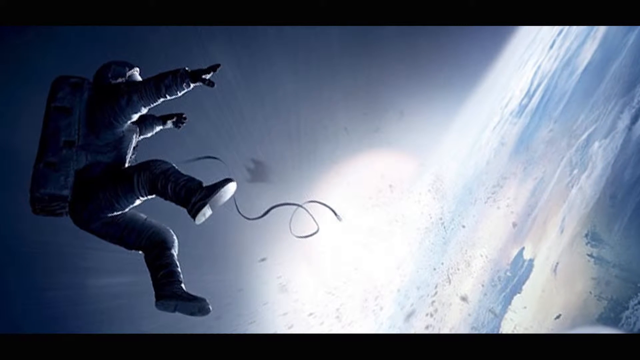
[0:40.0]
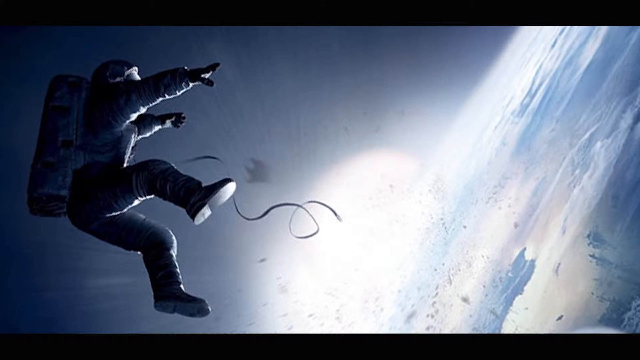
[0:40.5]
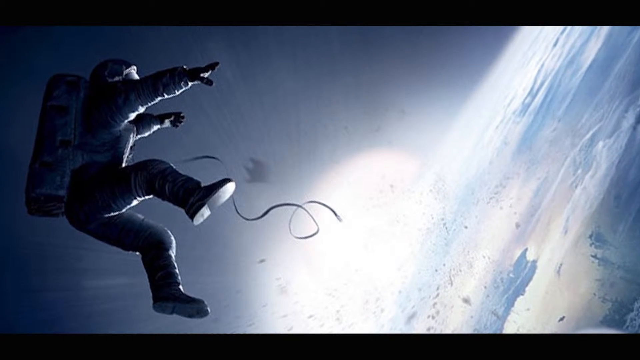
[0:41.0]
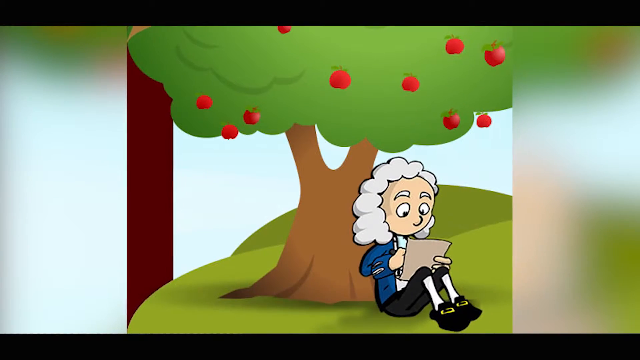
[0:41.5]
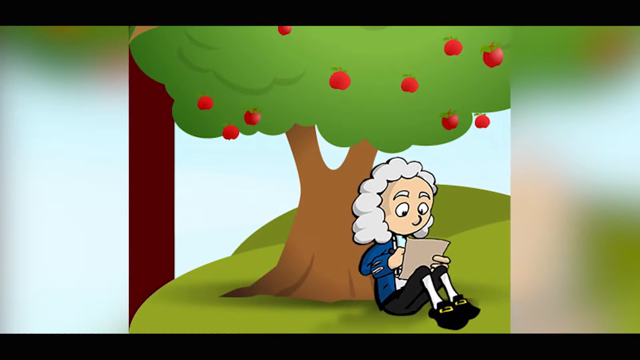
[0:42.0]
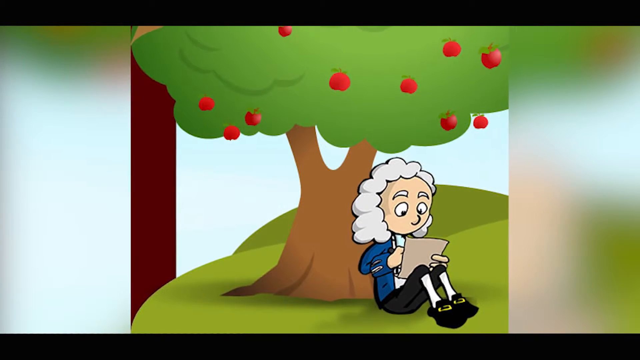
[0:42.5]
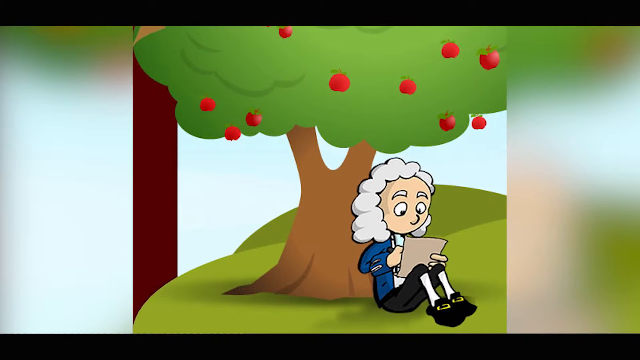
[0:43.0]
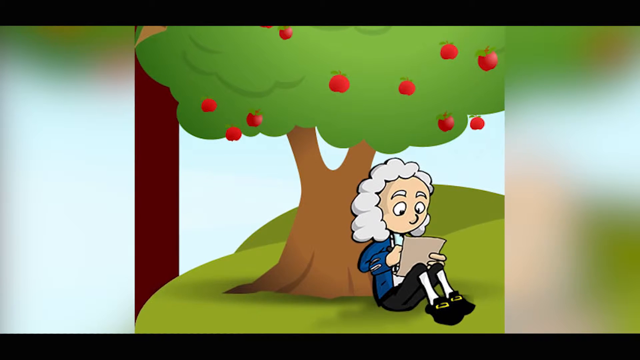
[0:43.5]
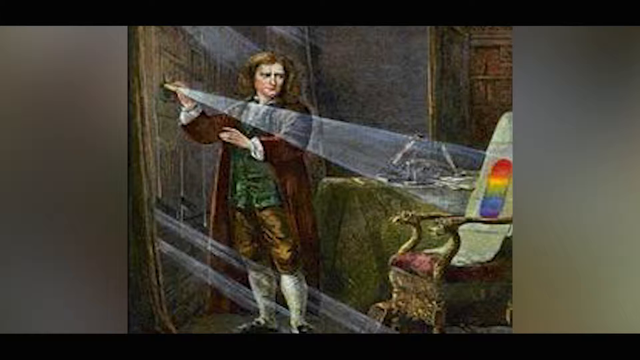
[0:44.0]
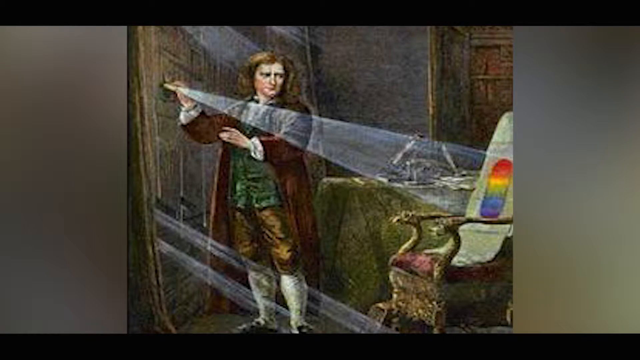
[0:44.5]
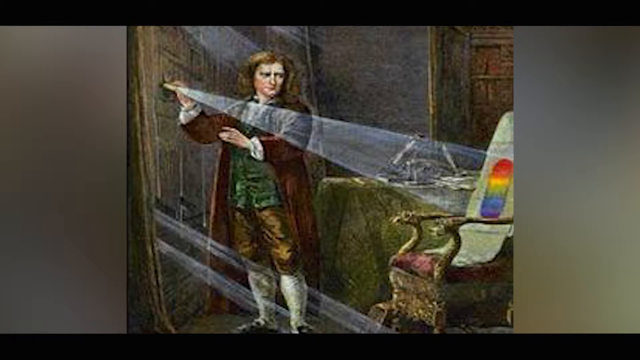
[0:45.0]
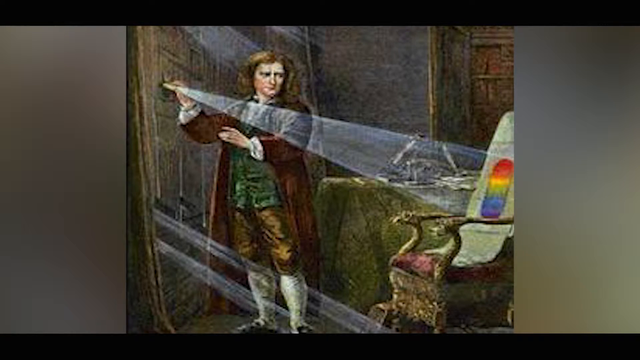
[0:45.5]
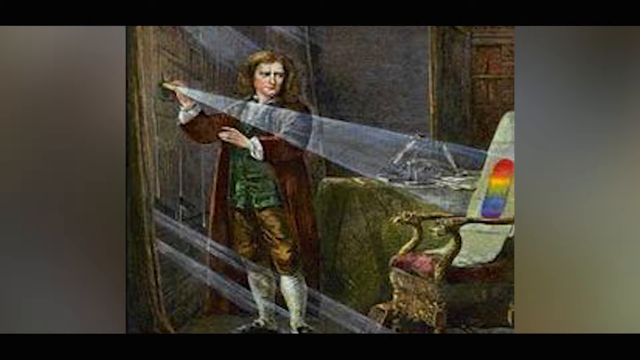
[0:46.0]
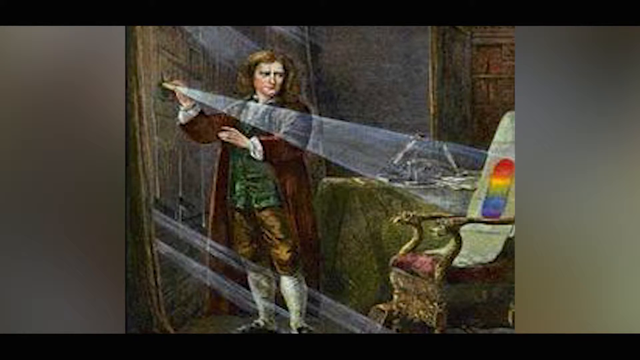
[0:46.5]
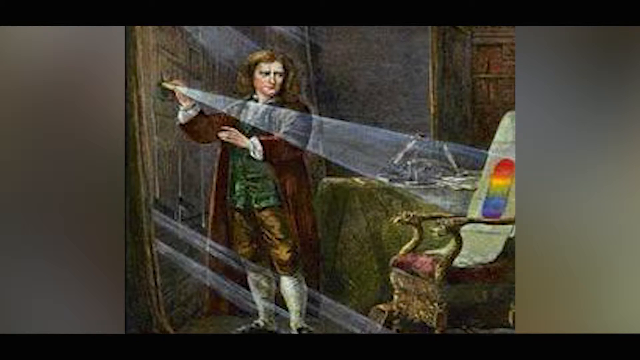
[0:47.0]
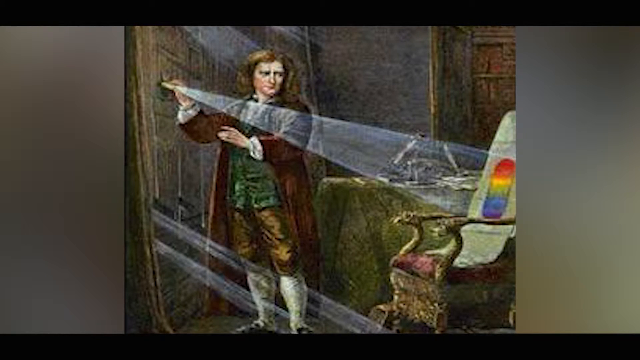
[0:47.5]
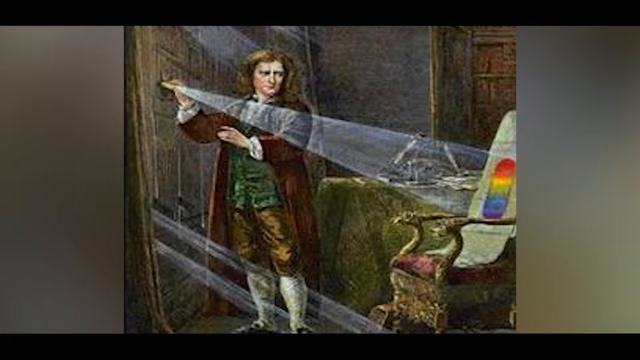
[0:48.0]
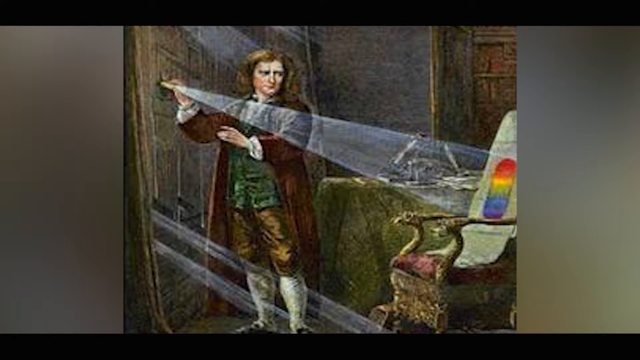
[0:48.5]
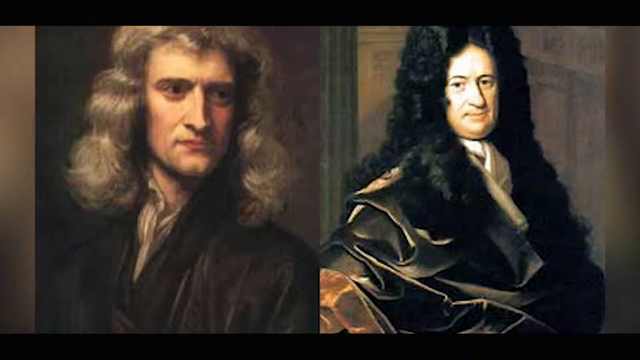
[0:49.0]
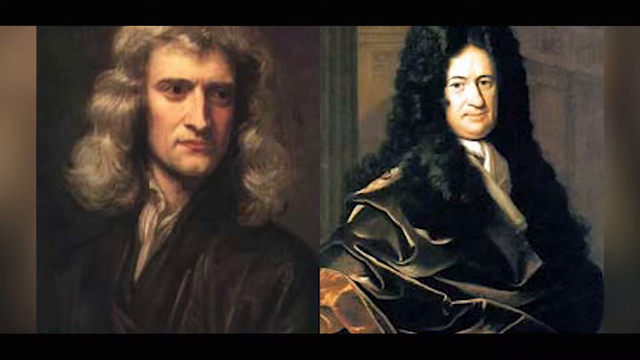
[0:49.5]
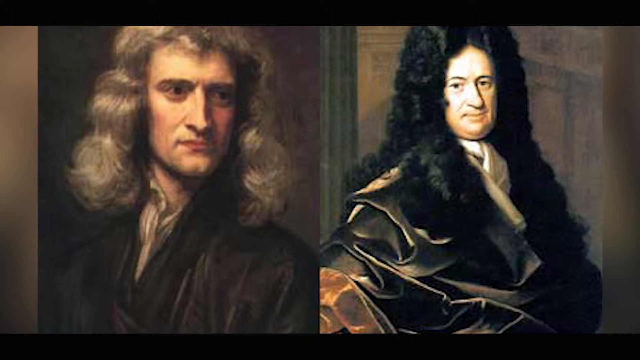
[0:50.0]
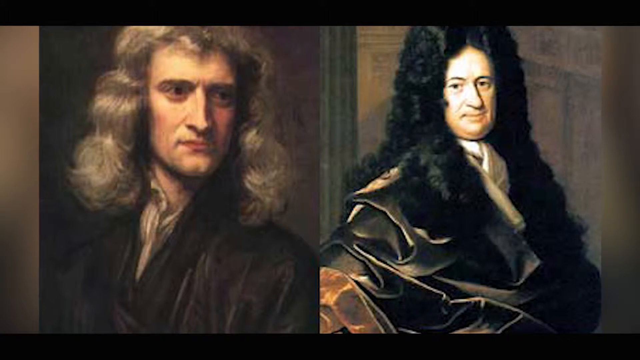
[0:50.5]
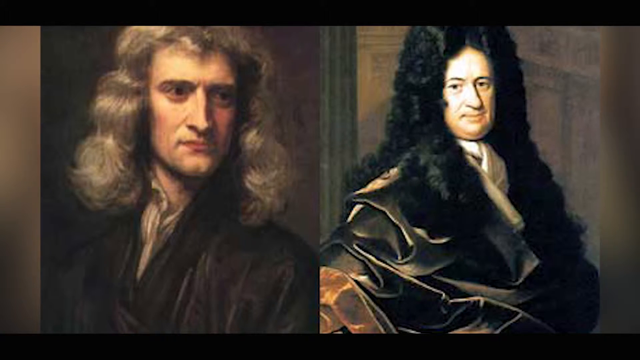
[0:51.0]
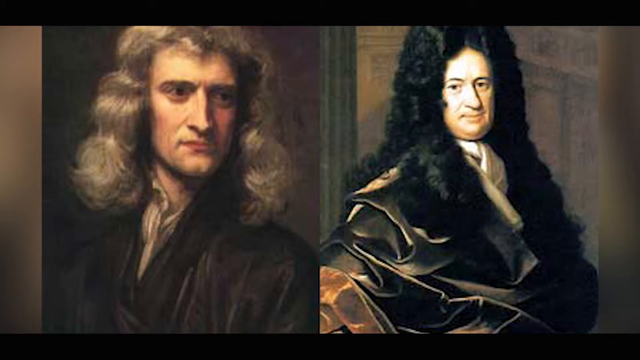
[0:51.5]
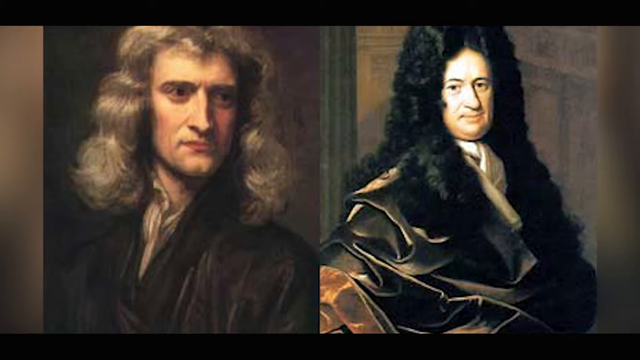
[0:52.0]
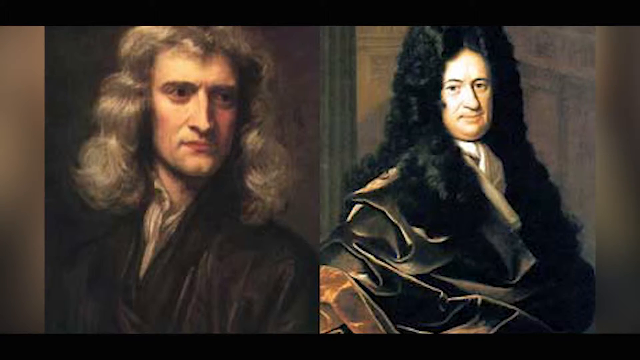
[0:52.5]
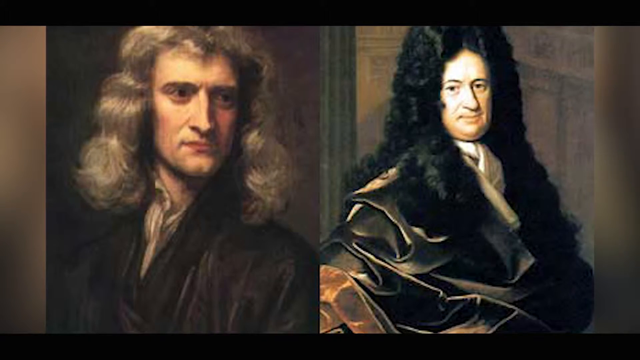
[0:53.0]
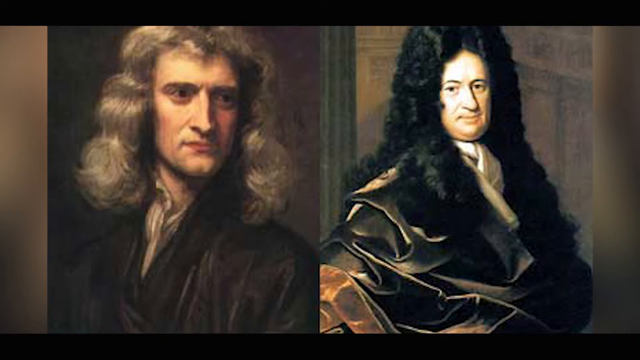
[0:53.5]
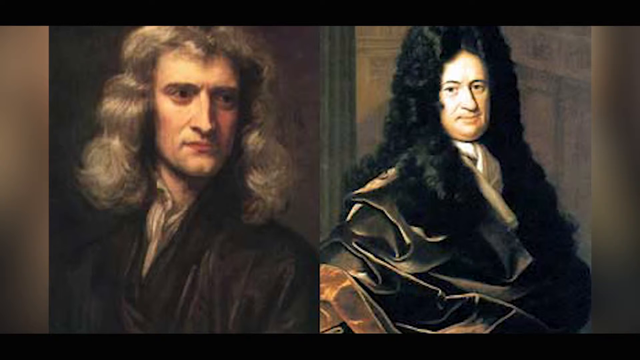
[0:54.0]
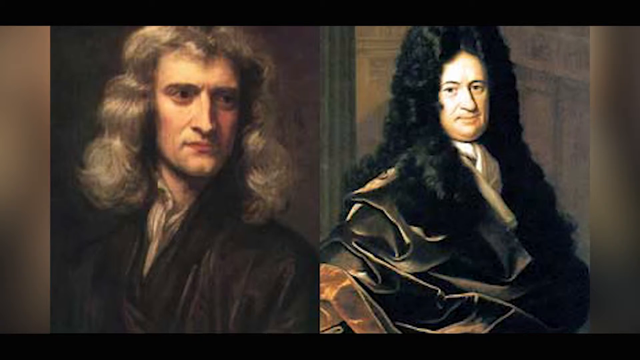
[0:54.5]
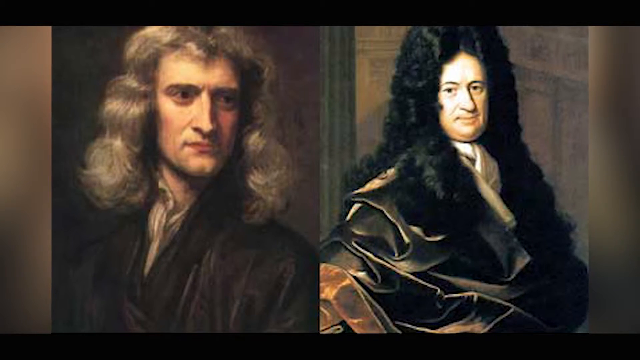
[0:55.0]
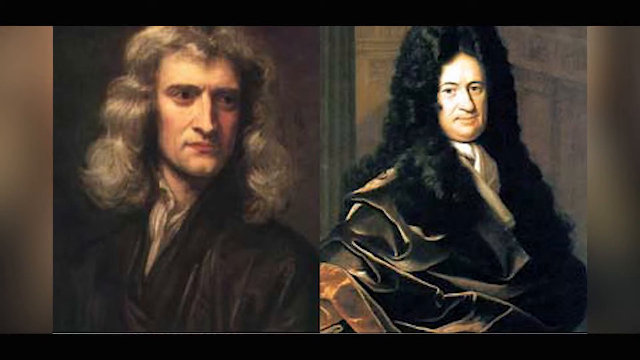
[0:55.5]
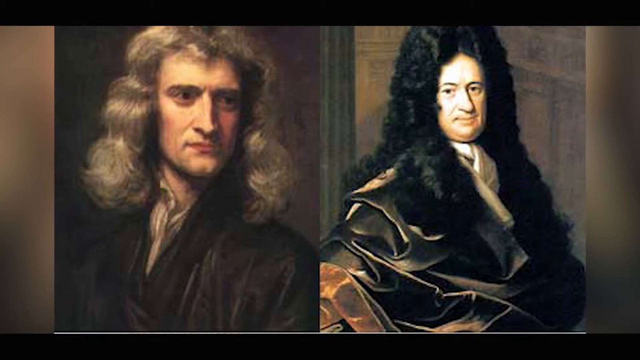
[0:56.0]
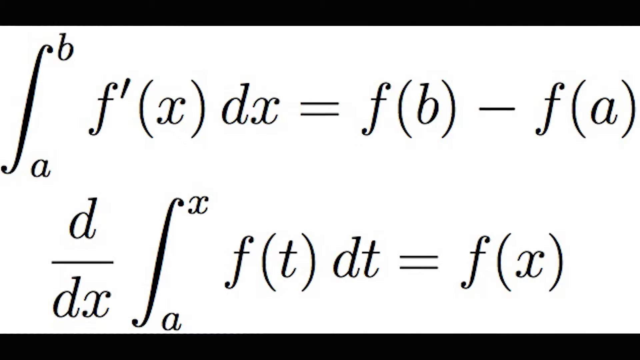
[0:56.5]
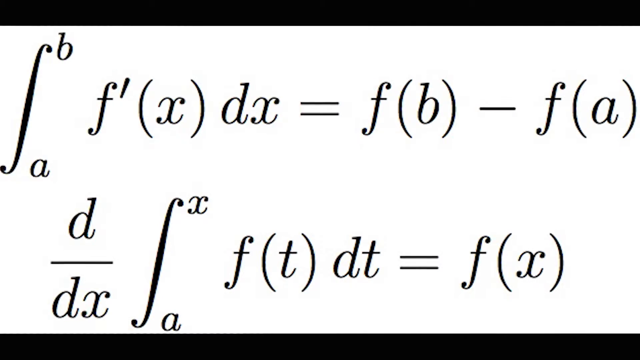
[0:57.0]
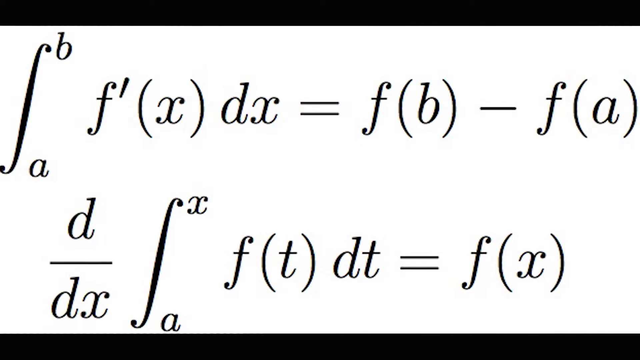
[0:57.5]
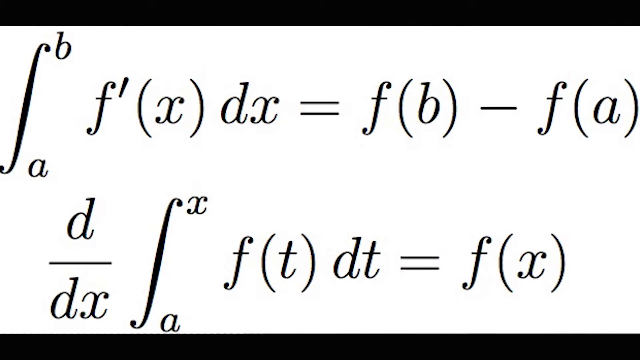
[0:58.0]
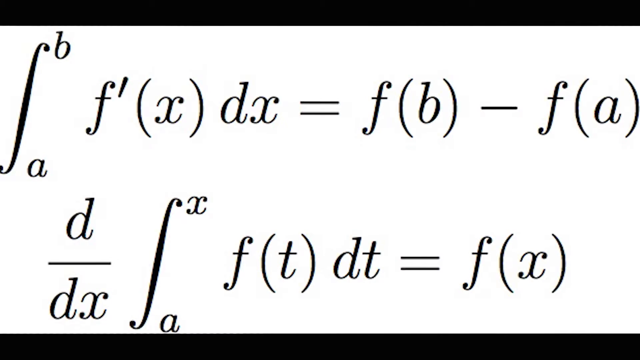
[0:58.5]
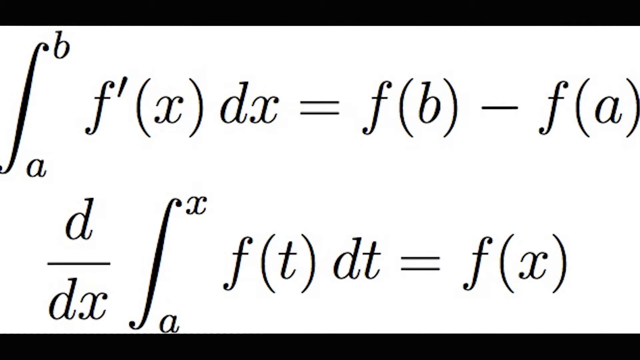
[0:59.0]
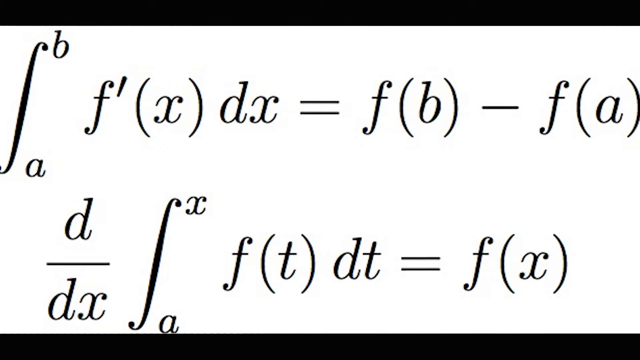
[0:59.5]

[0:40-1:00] A man floats in space wearing full space gear, including a space suit and an oxygen tank. Below him, a sun shines on a planet that looks like Earth. Next, a serious man with white hair sits under an apple tree holding a paper, apparently writing something. He wears a blue jacket, black trousers, white socks, and black shoes, and the apples on the tree are red. A man then holds a light that reflects on an object, producing red, orange, yellow, green, blue, and purple colors that look like a rainbow. Behind him is a table that appears to be covered by a green cloth, with something on it that looks like a microscope. The man has brown hair, looks to be in his forties, and wears a brown jacket, long white socks, brown trousers, and a green shirt. Two paintings then appear side by side: the one on the left was shown before, and the new one on the right shows a man with long, black, curly hair who looks like a man of influence.